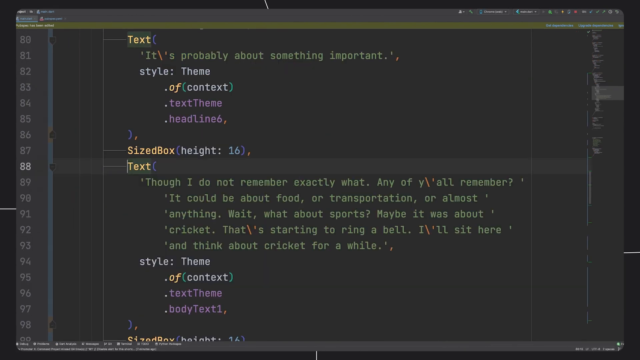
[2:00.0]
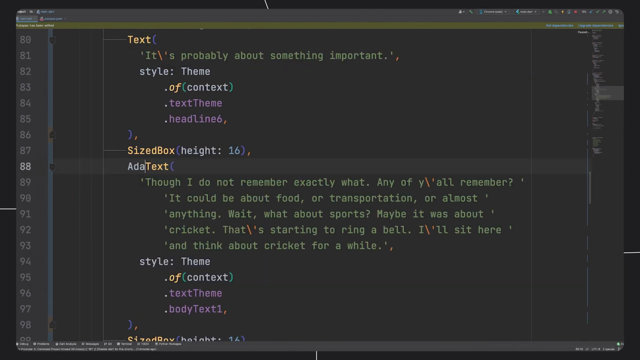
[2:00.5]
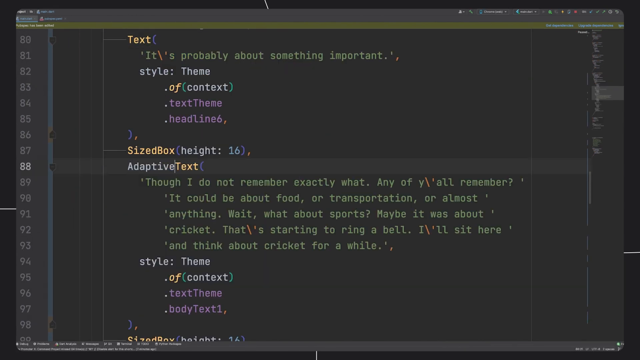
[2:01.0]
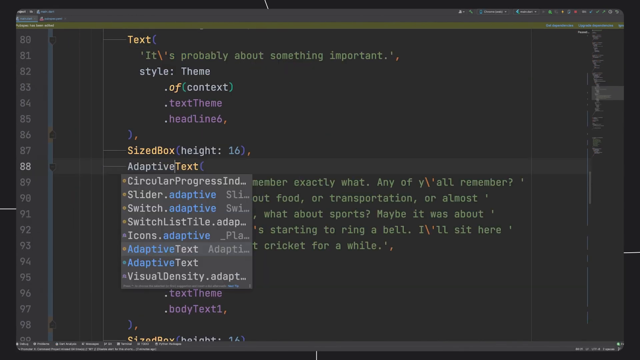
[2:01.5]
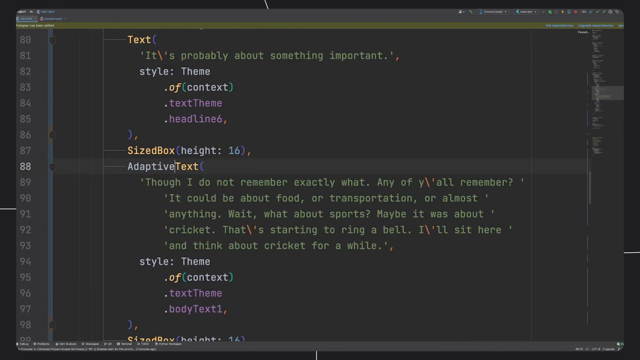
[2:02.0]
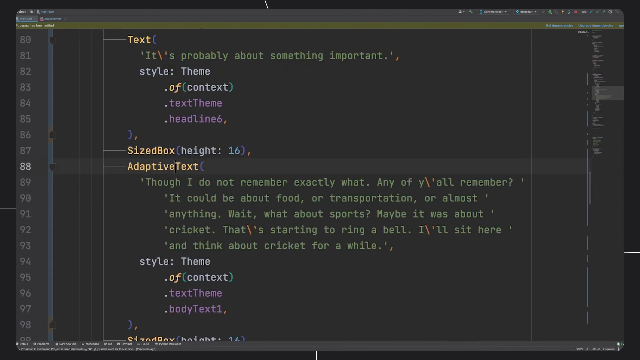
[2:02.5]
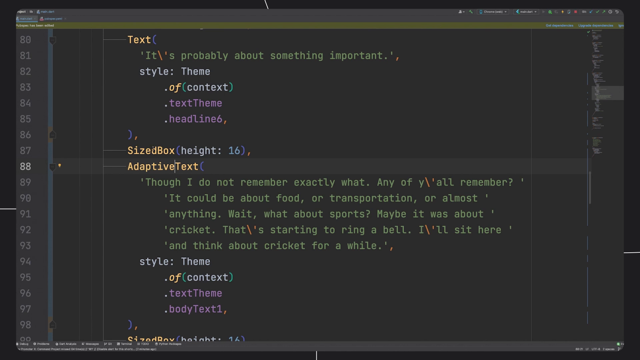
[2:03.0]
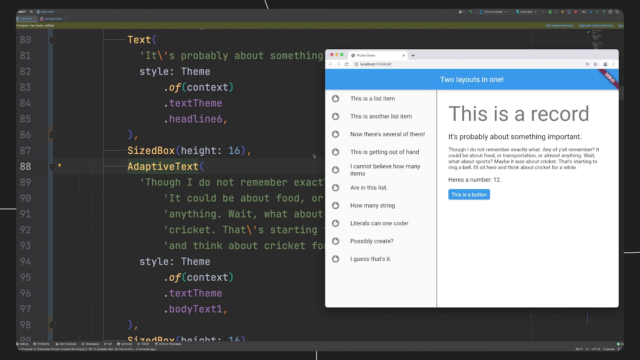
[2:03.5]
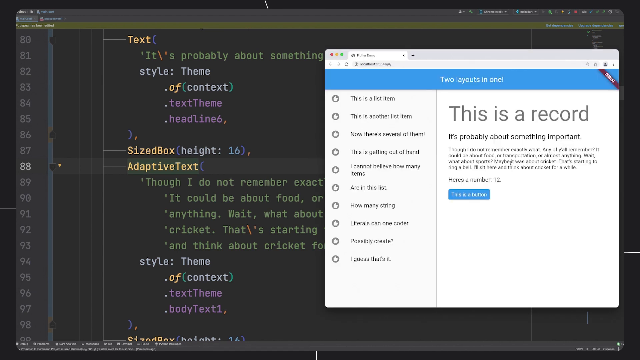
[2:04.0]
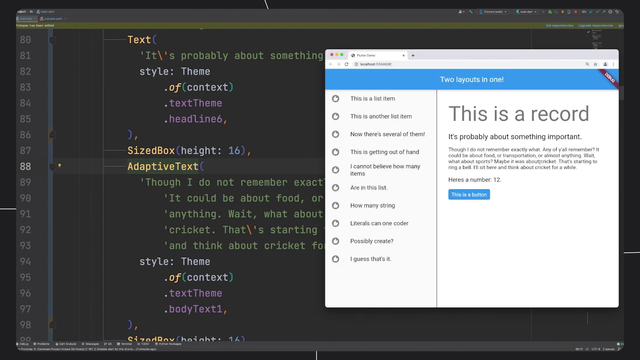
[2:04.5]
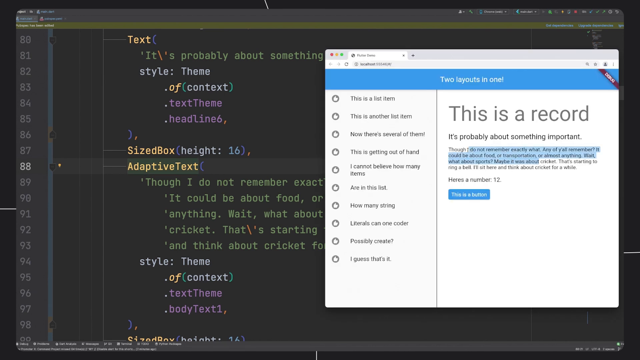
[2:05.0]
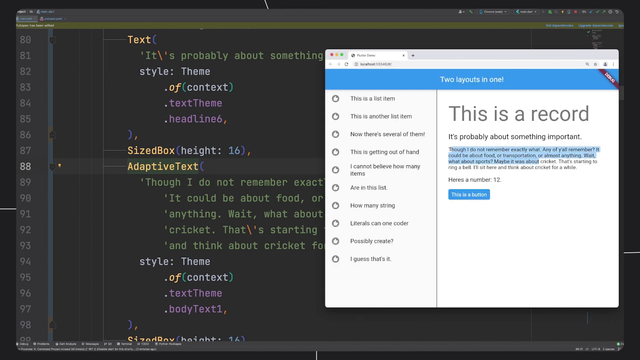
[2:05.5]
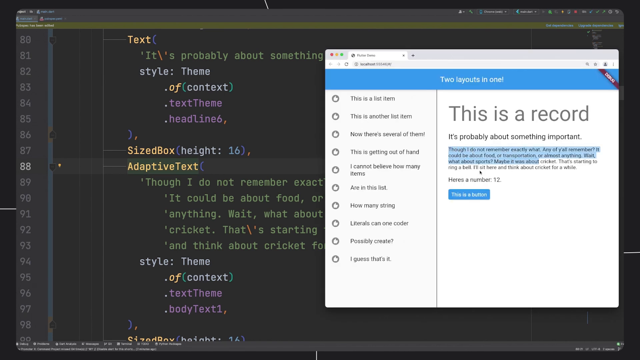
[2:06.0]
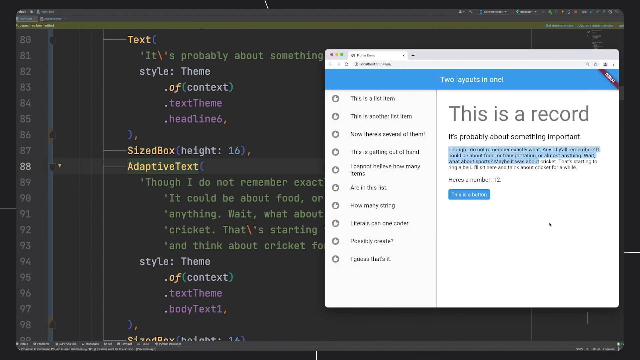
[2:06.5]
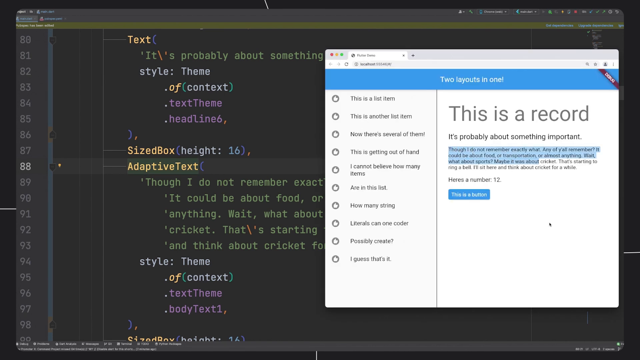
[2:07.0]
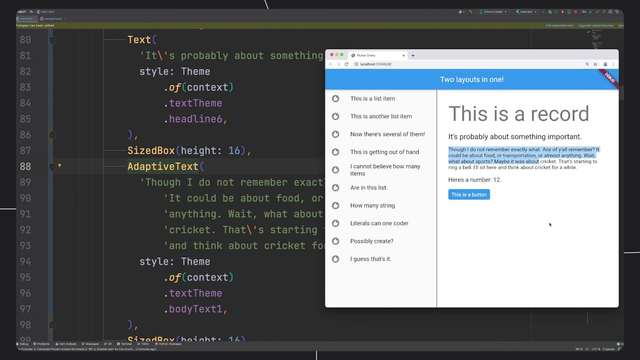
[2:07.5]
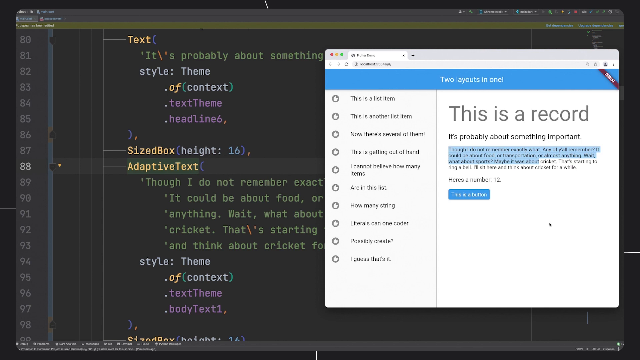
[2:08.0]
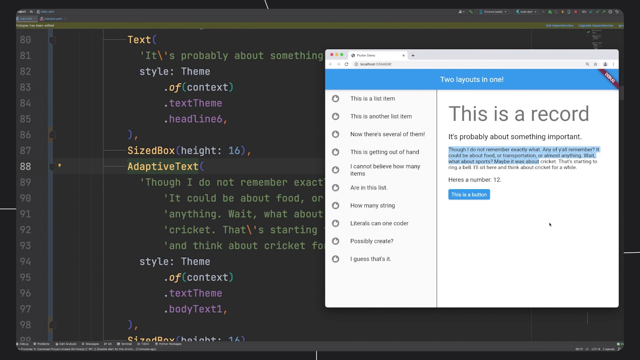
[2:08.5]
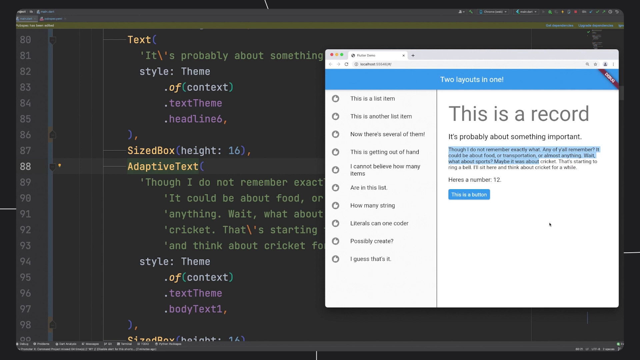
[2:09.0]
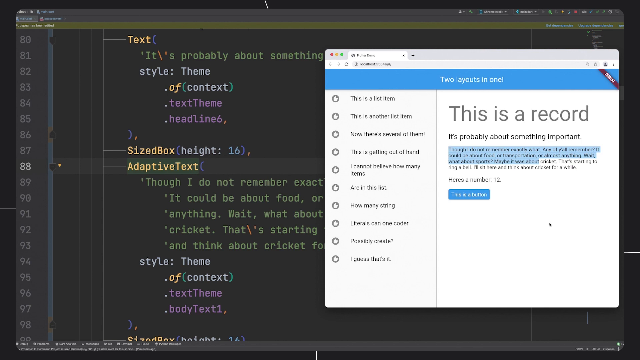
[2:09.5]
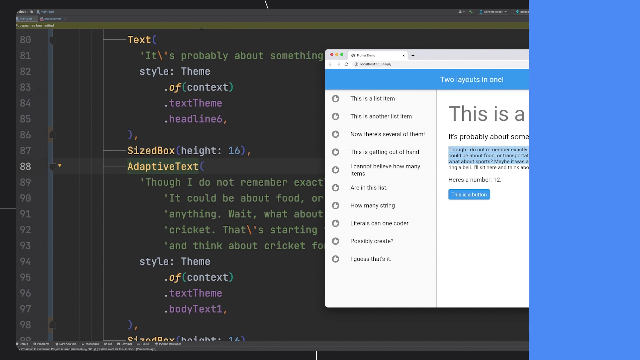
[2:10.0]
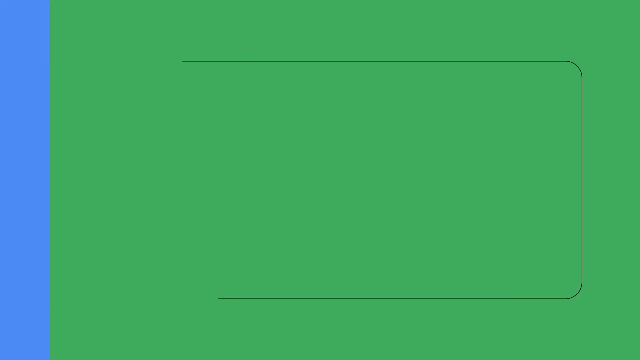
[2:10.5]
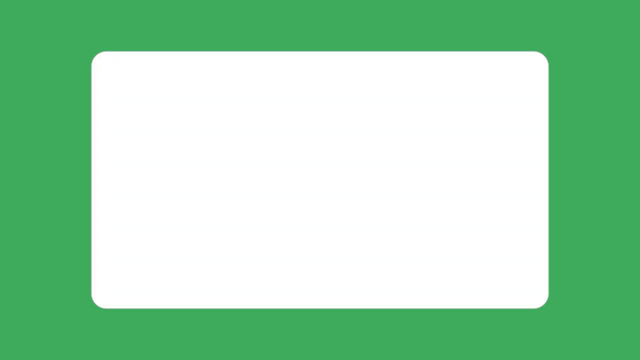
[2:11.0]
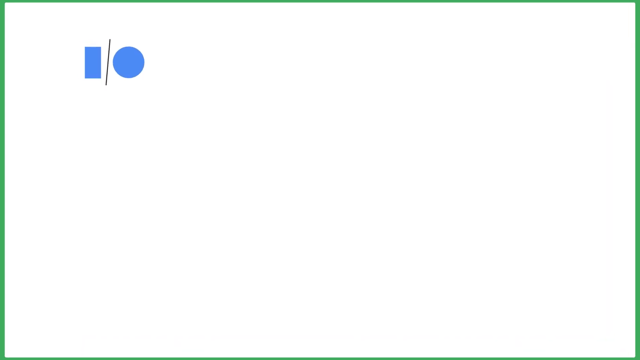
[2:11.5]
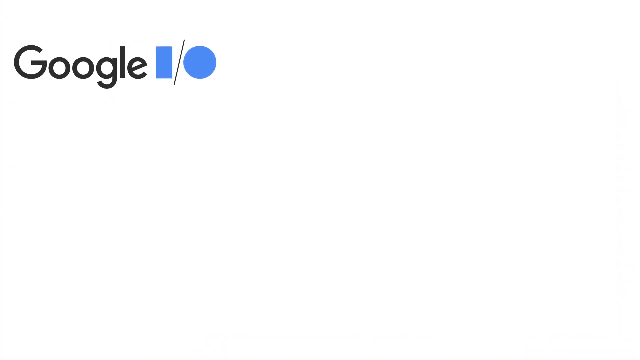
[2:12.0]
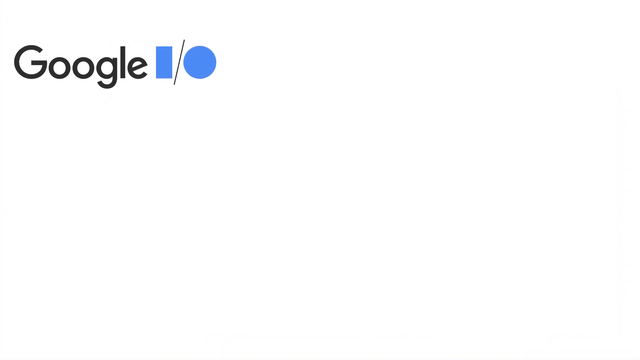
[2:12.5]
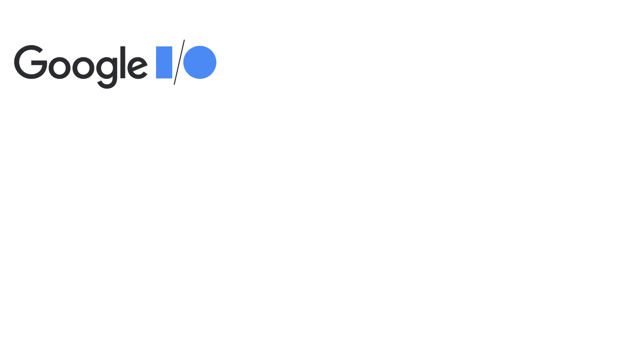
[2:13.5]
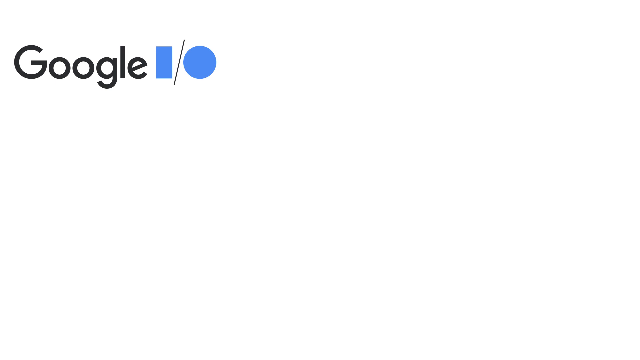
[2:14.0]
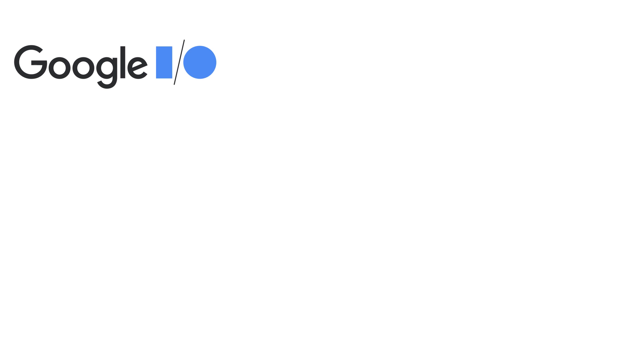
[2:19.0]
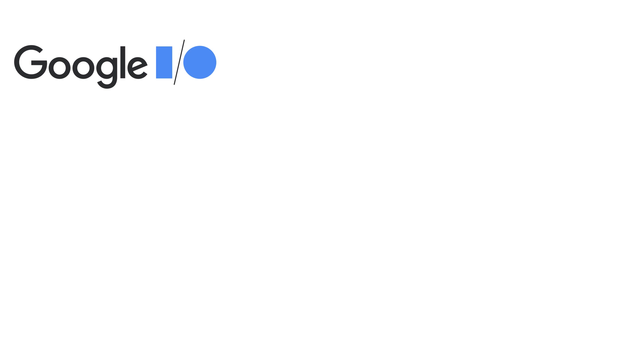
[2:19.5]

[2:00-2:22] The developer continues with the code, copying something from the side and pasting it. The view goes back to the Google screen, this time with a white background, "Google" written in black and the other text in blue. It shows adaptive design and the templates, then a welcome screen reading "log in to your account to view your existing account". He logs in and starts a new one, and different options appear in the app. He copies something and seems about to paste it. He zooms out and shows the application fitted to a certain screen size, then puts his code into the computer again.